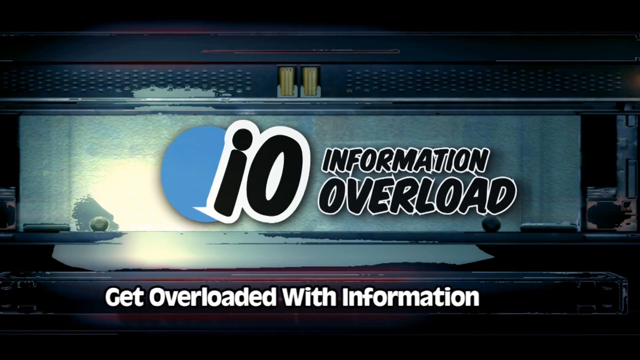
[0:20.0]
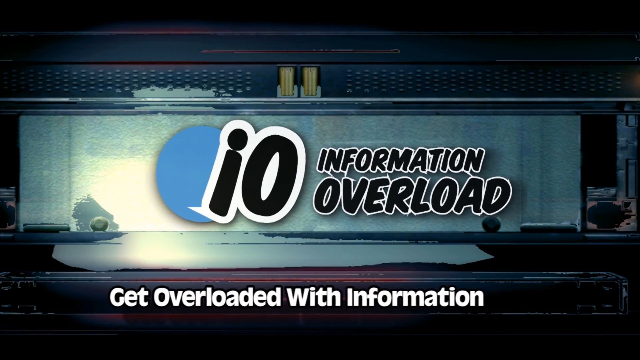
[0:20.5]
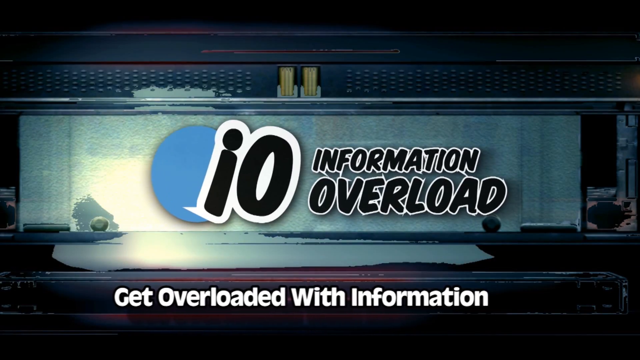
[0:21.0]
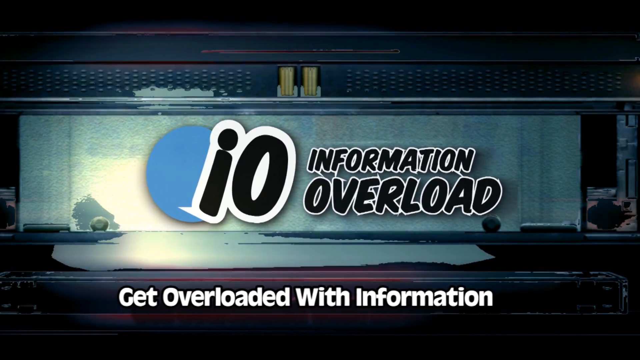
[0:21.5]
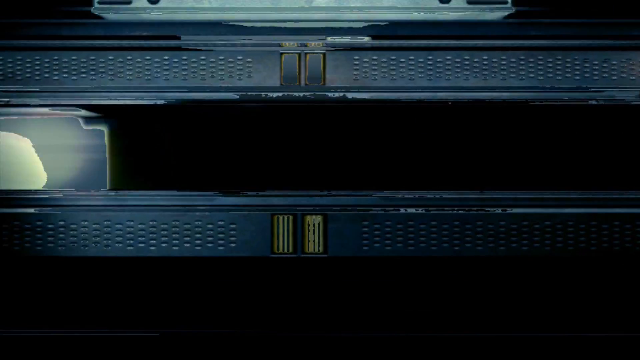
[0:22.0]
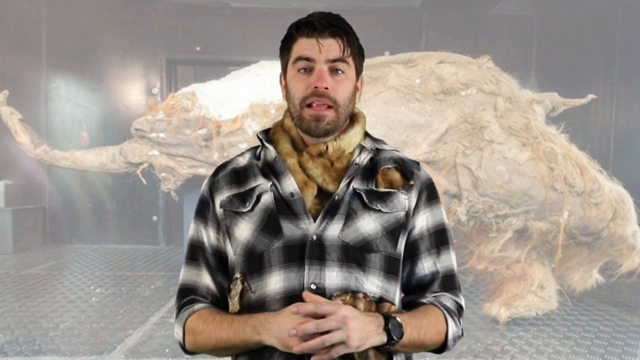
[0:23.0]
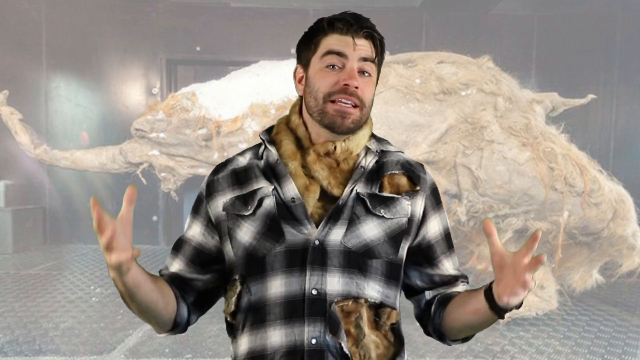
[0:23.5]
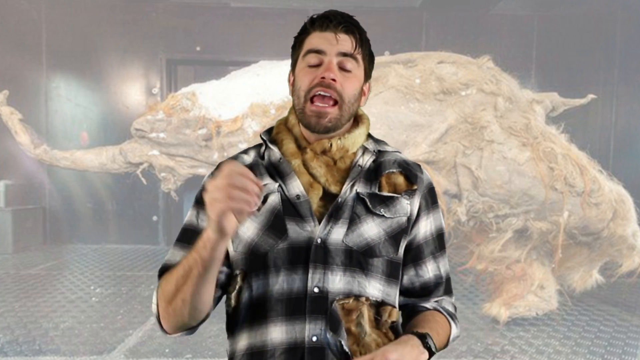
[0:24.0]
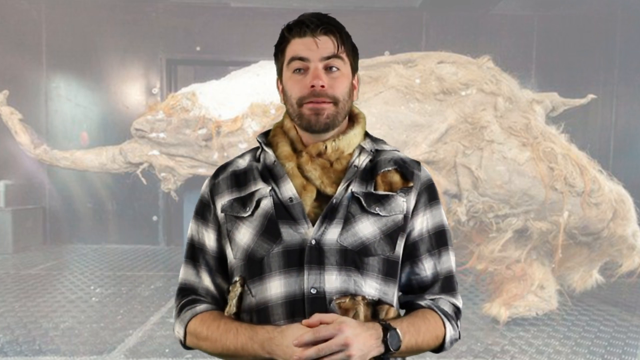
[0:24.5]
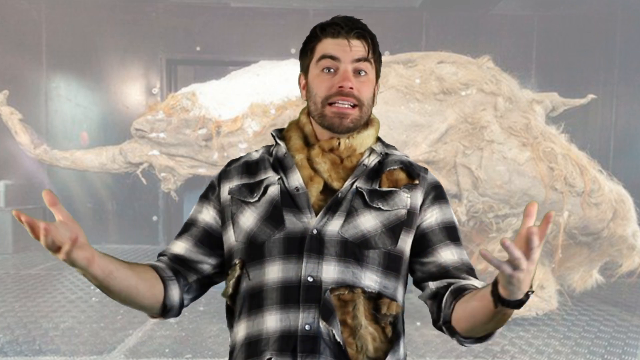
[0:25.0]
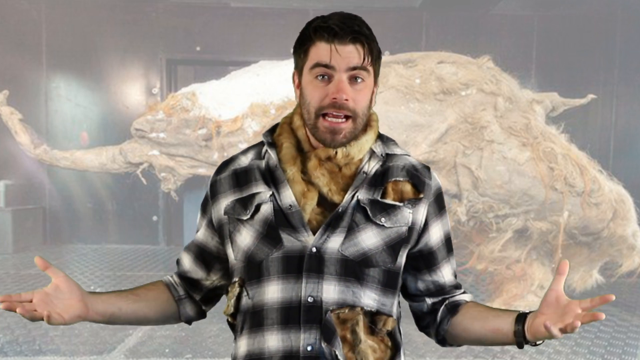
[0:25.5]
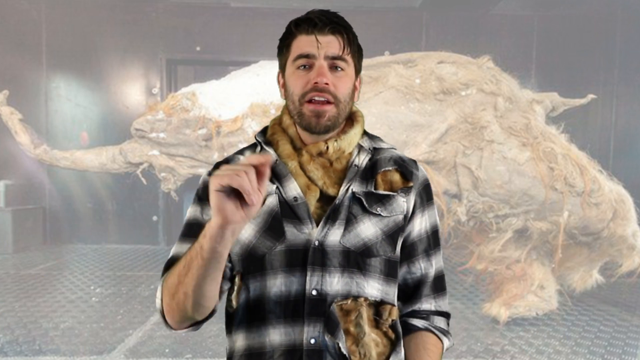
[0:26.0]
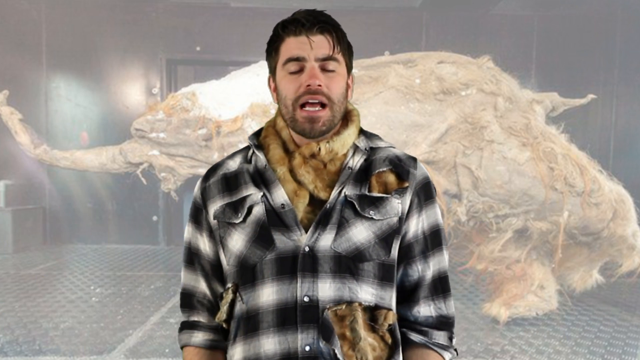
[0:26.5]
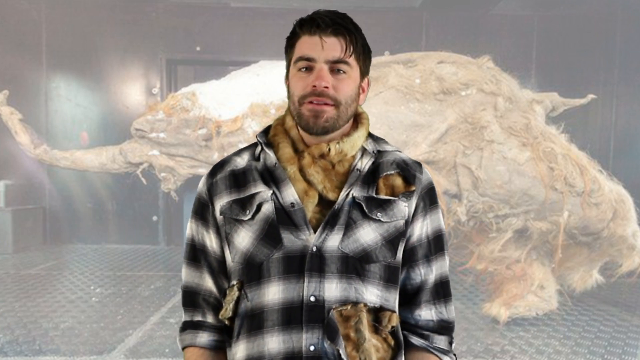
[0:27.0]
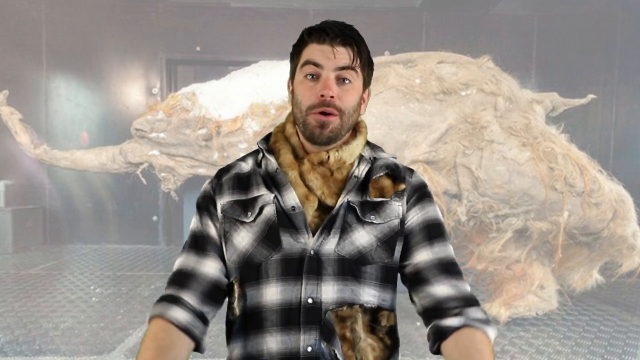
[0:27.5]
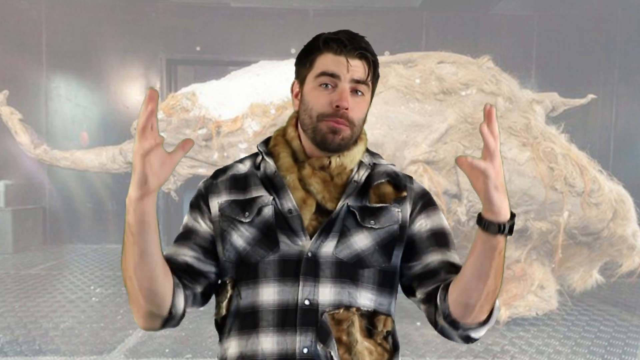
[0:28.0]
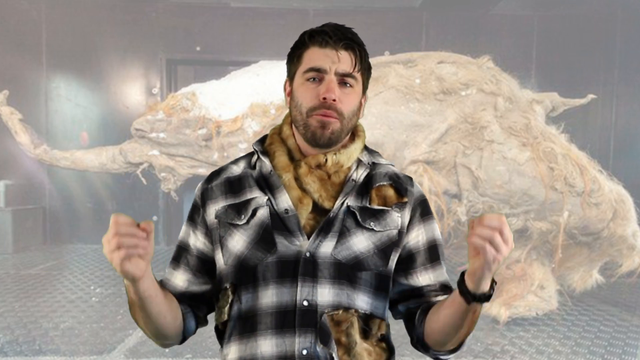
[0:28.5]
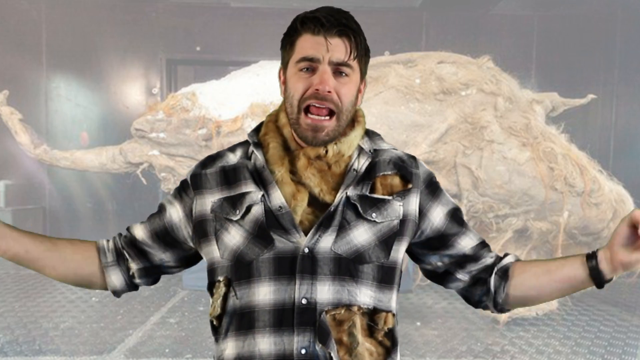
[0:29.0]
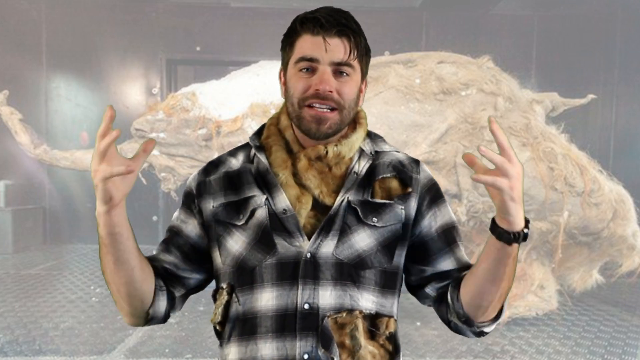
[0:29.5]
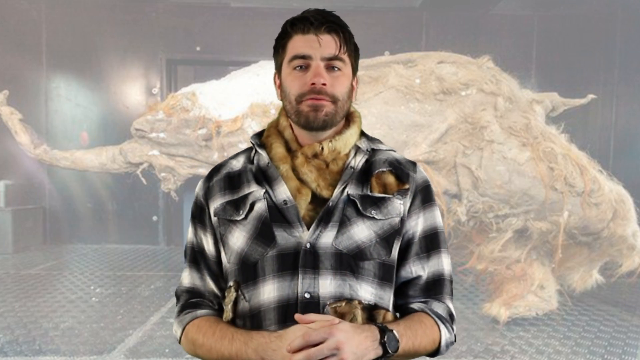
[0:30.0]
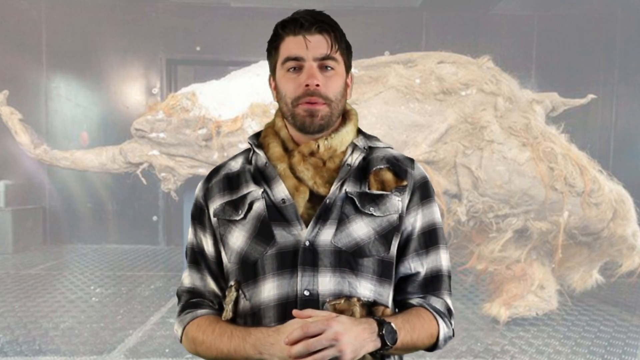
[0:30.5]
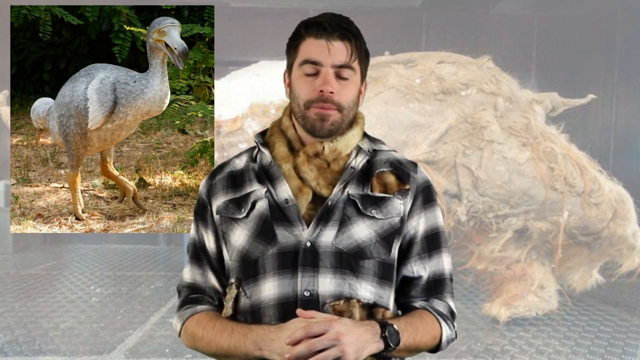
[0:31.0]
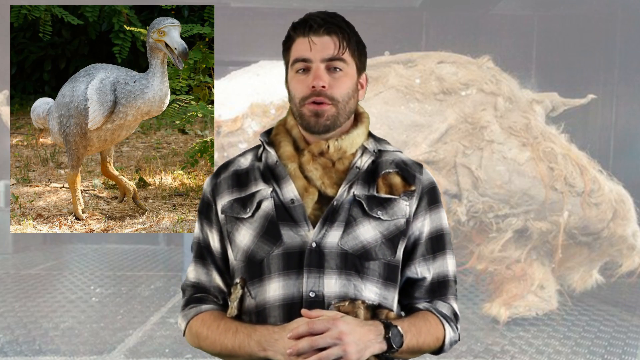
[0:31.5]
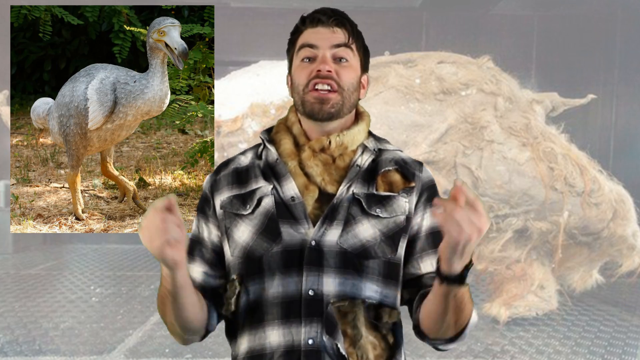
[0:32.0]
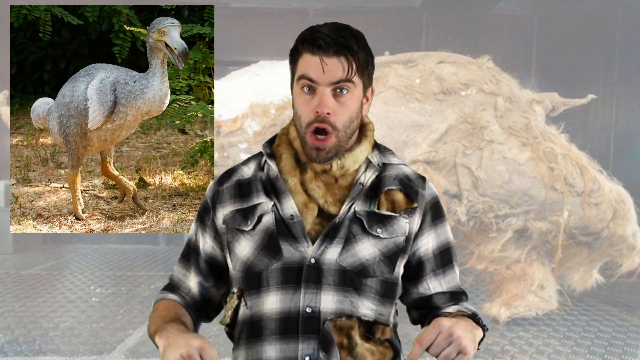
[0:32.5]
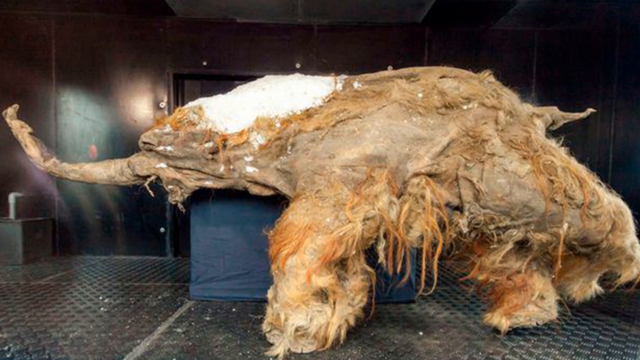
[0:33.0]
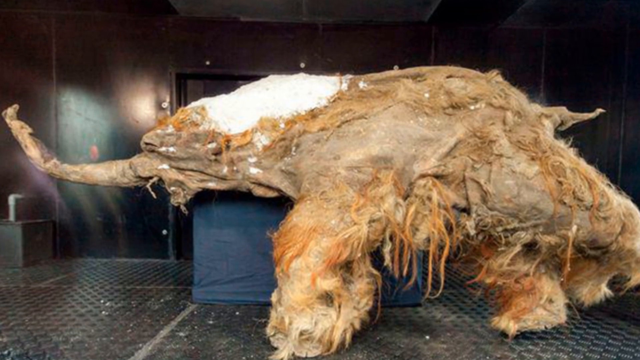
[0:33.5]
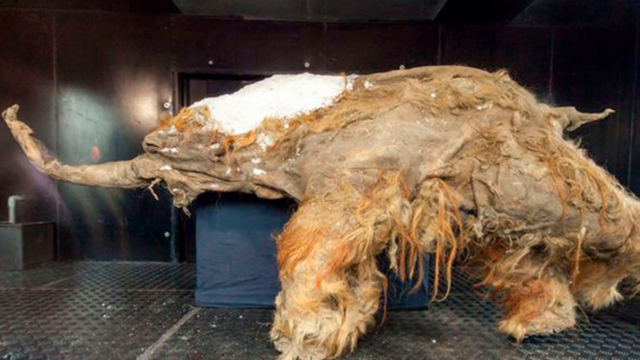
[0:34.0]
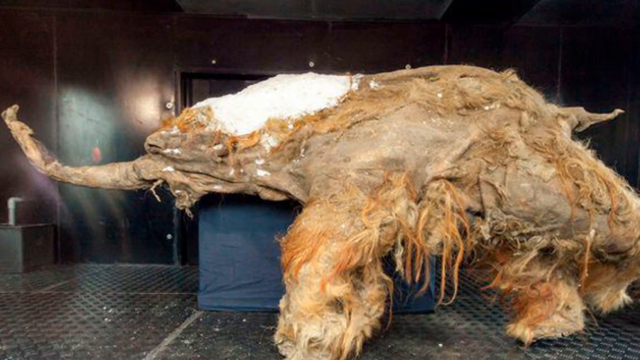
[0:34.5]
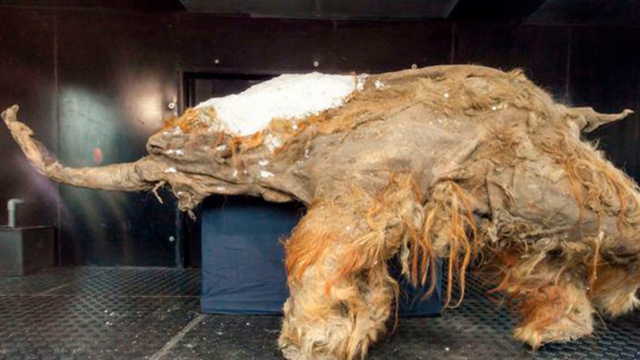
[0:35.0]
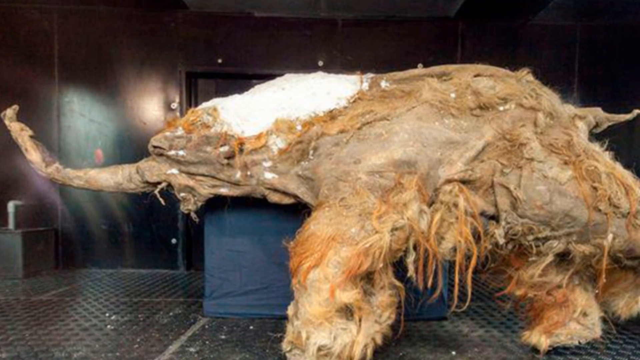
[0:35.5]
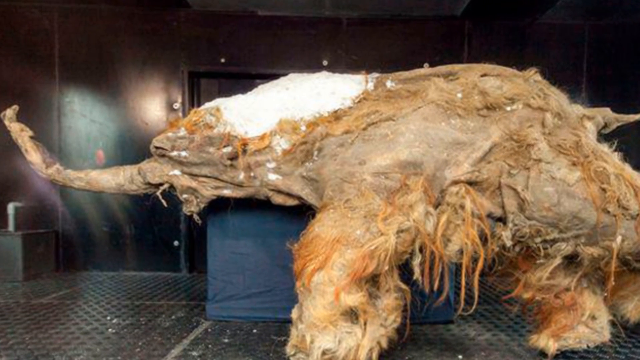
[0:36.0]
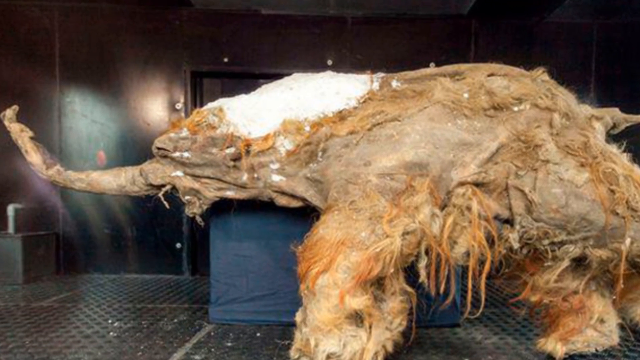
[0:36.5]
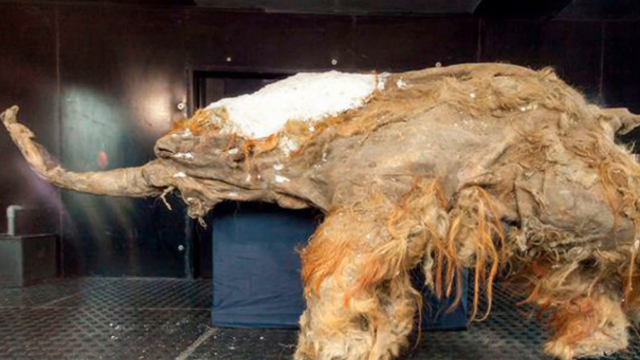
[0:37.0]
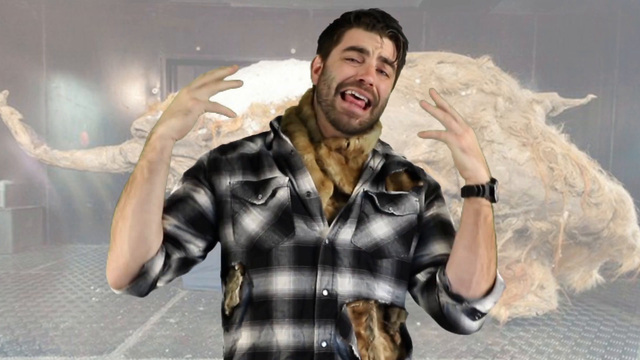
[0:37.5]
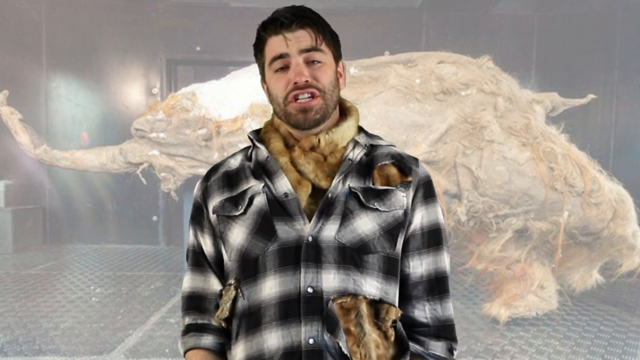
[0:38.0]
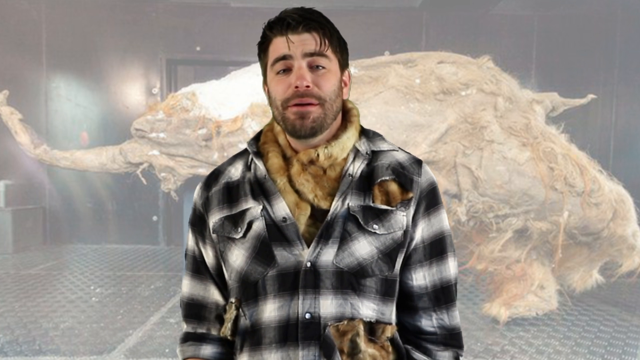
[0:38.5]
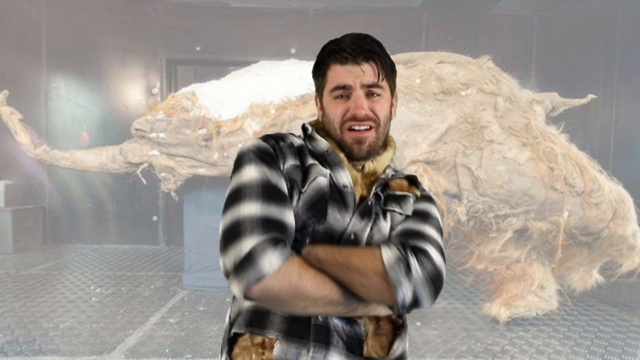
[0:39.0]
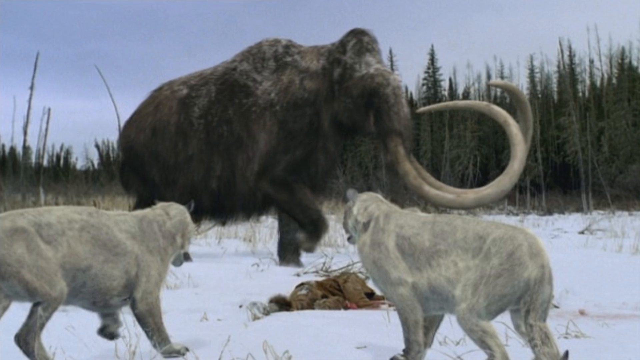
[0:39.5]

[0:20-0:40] Text appears reading "IO information overload", and at the bottom it reads "get information with". The background is black with small amounts of red lines; it almost looks like a chalkboard, and also sort of like a license plate with the logo over it. The text shoots off the screen, and the chalkboard-like background flies off to the left, followed by a couple of flashes before Michael returns. He continues using a lot of hand gestures and wears a watch on his left wrist. He shows a couple of pictures on the left side of the screen (his right side), including something that looks like a dodo bird, and then an image of the fossilized creature behind him, which kind of looks like an elephant or maybe a mammoth. Just before the shot changes, a mammoth pops up on screen for a few frames, confirming that the creature is a mammoth.